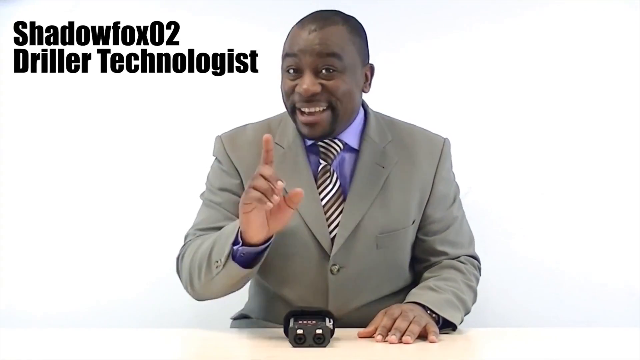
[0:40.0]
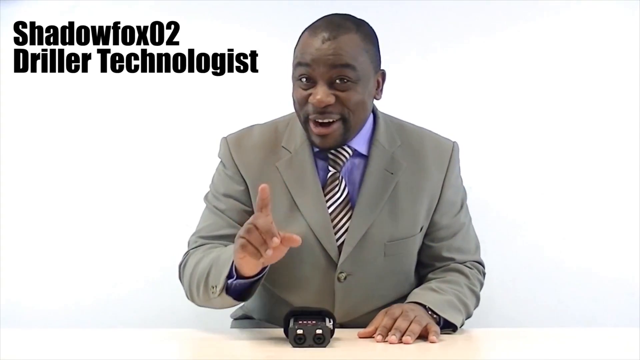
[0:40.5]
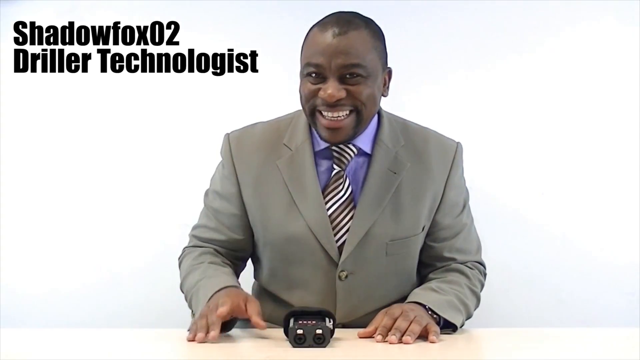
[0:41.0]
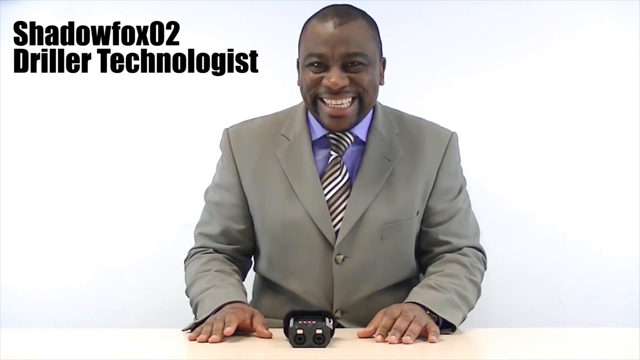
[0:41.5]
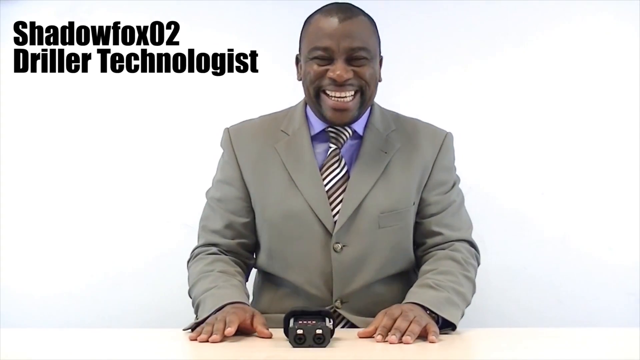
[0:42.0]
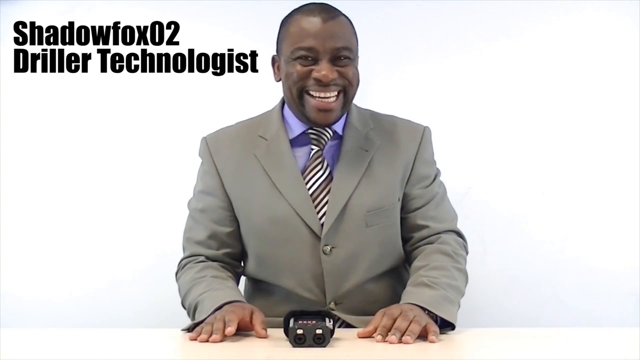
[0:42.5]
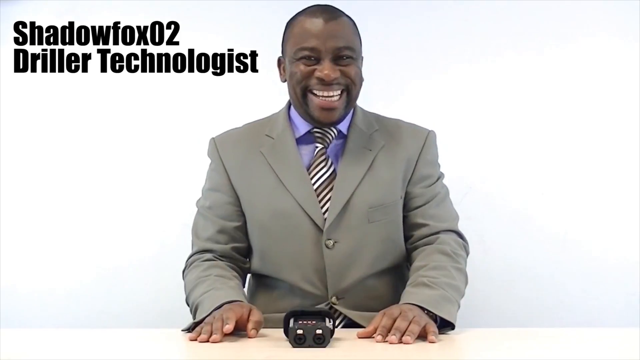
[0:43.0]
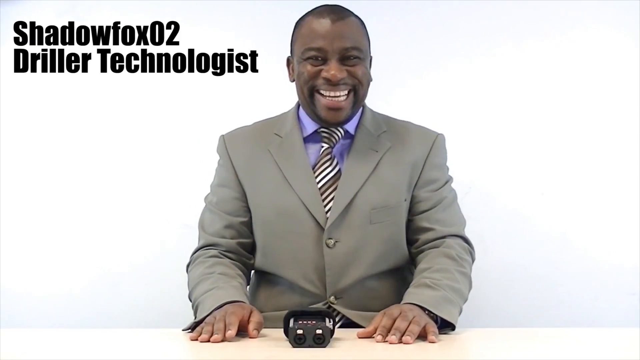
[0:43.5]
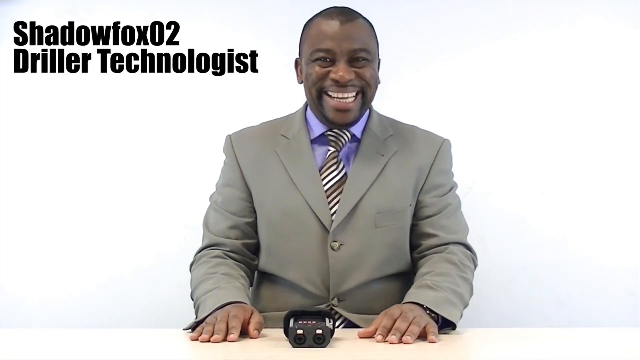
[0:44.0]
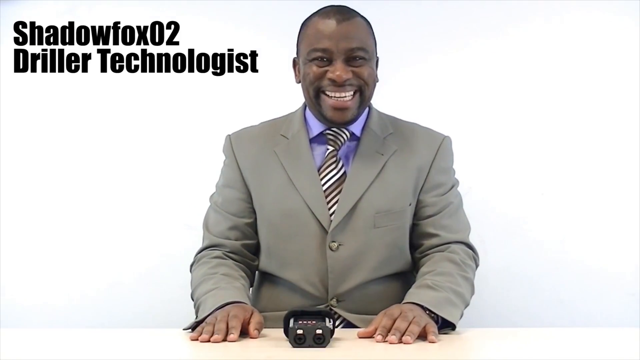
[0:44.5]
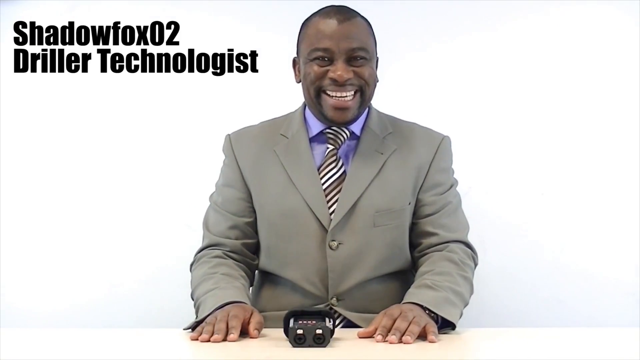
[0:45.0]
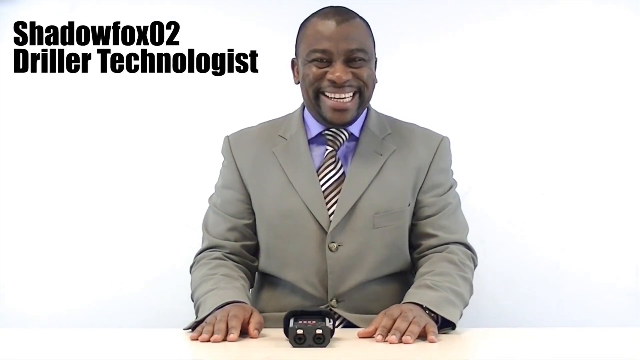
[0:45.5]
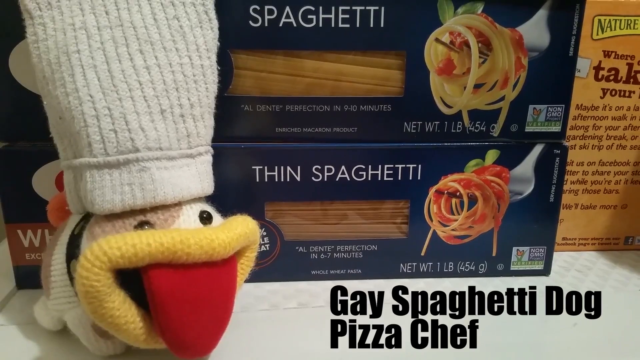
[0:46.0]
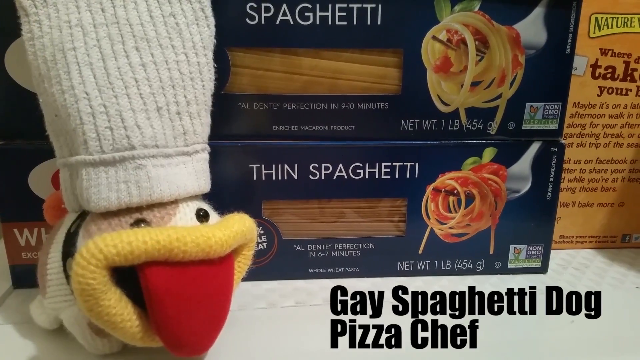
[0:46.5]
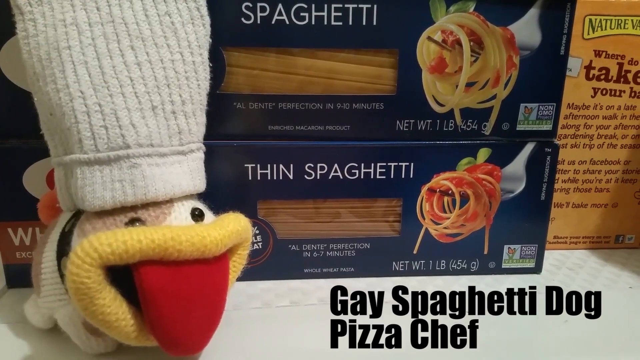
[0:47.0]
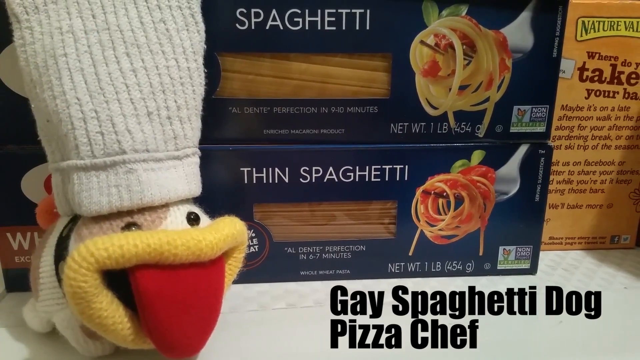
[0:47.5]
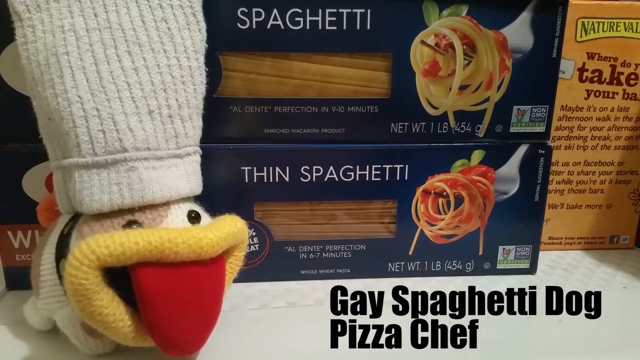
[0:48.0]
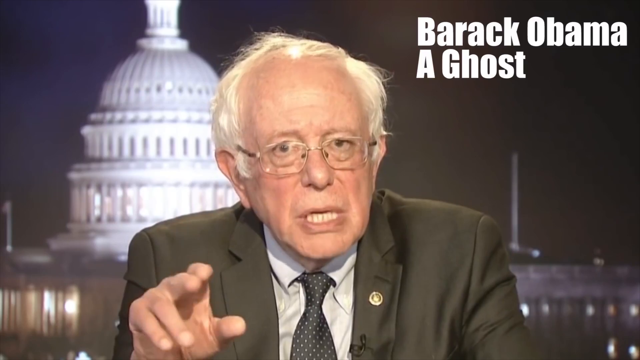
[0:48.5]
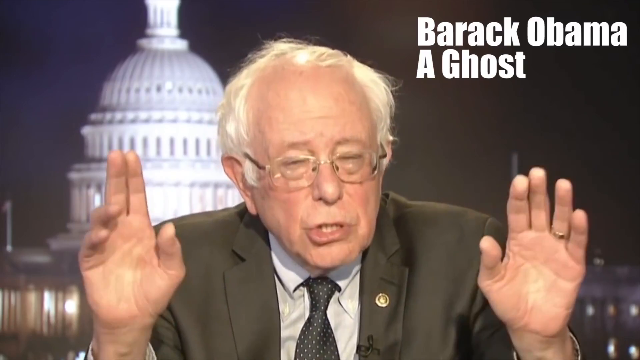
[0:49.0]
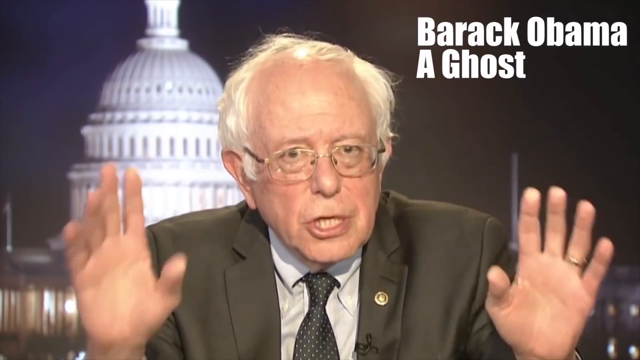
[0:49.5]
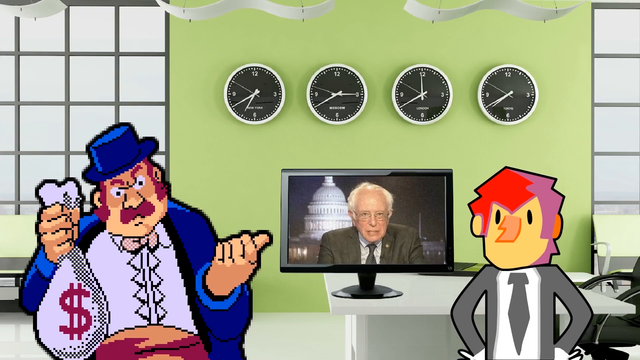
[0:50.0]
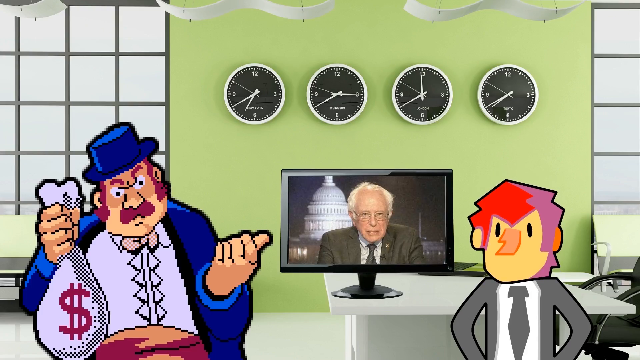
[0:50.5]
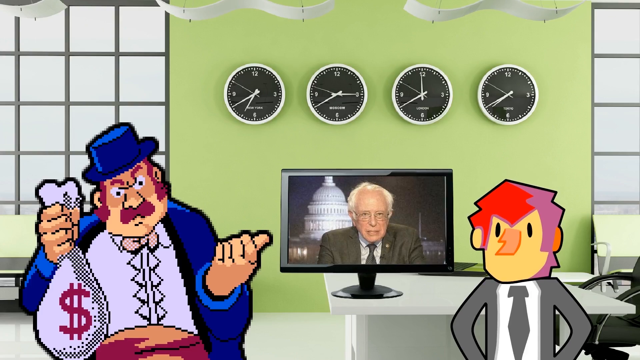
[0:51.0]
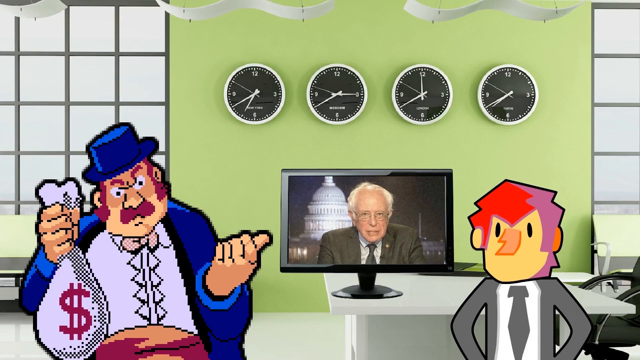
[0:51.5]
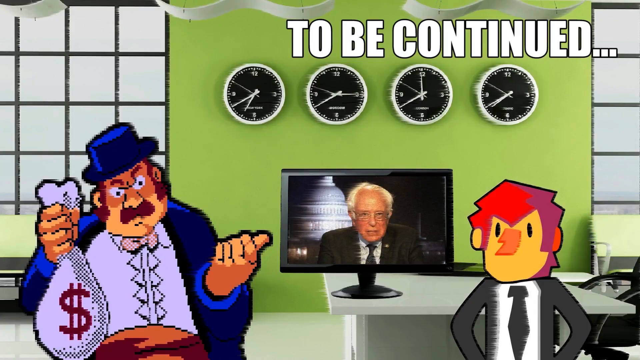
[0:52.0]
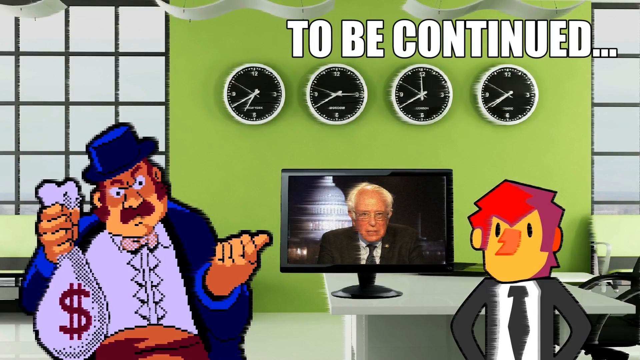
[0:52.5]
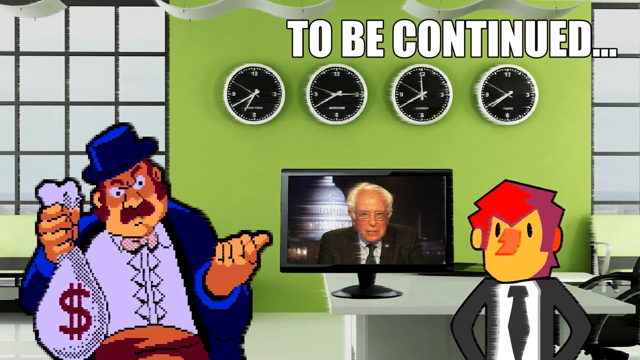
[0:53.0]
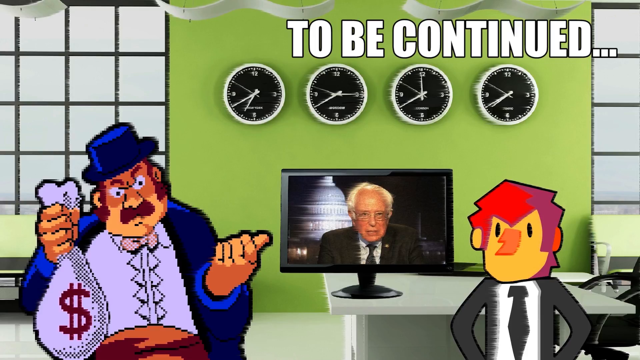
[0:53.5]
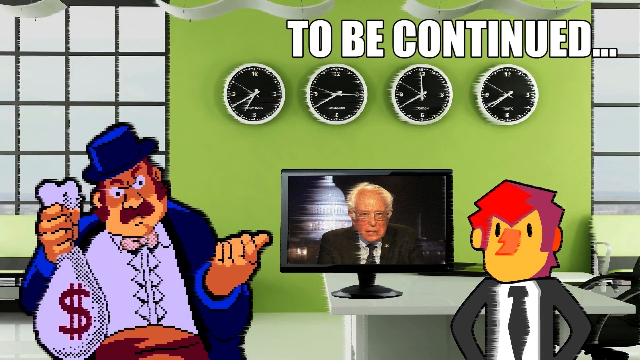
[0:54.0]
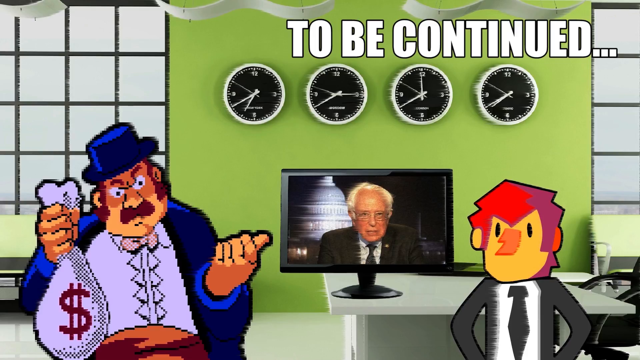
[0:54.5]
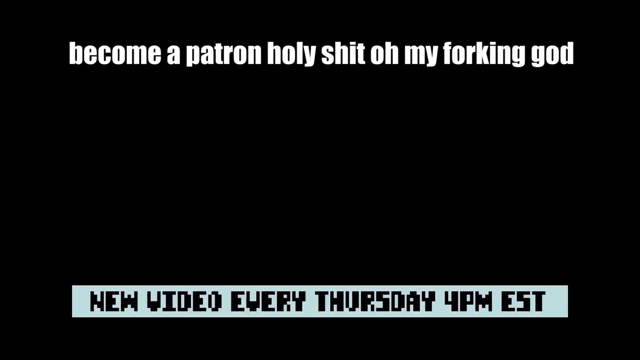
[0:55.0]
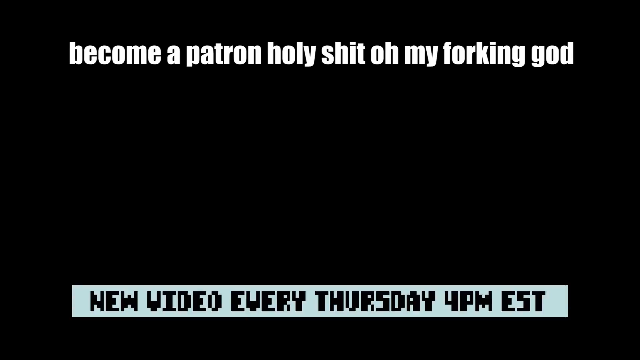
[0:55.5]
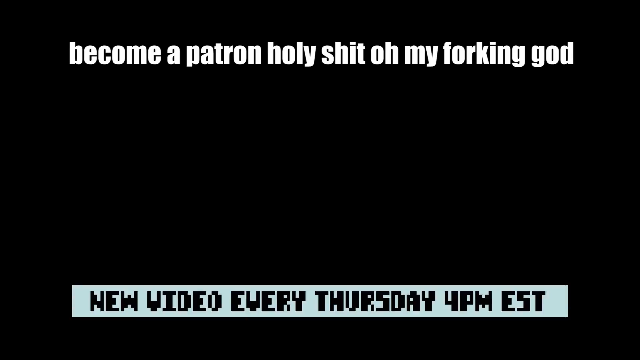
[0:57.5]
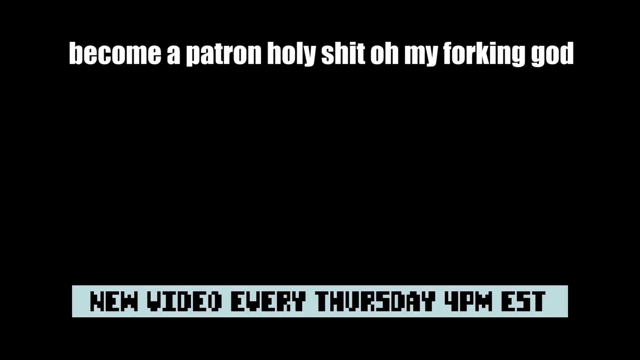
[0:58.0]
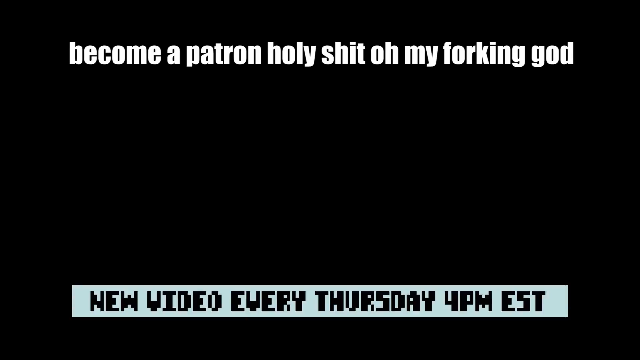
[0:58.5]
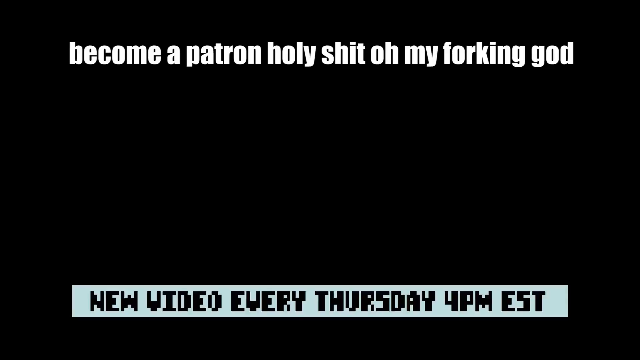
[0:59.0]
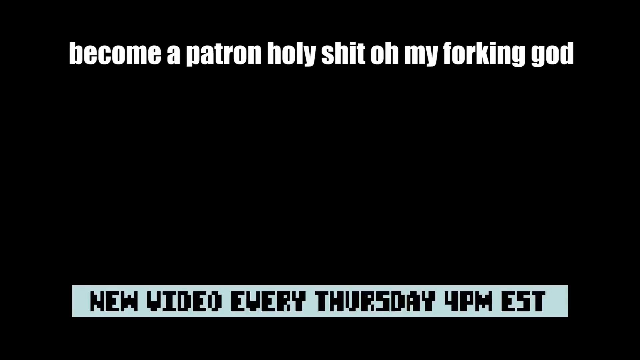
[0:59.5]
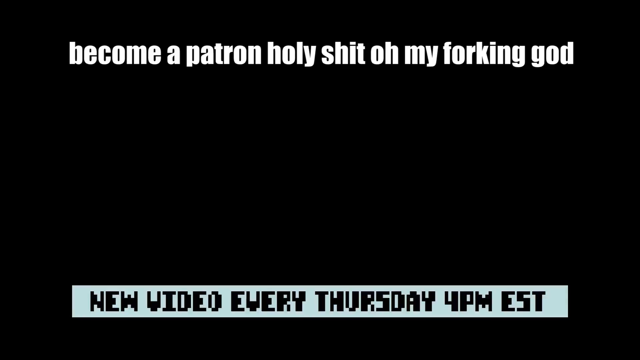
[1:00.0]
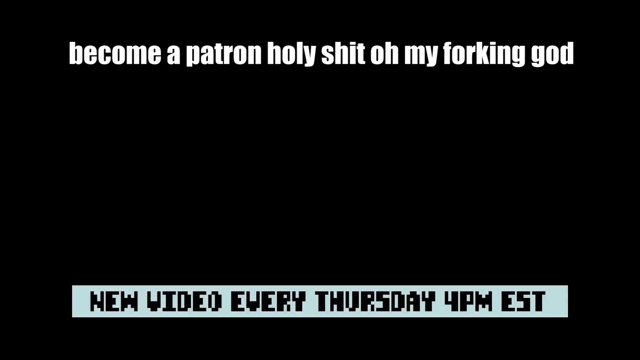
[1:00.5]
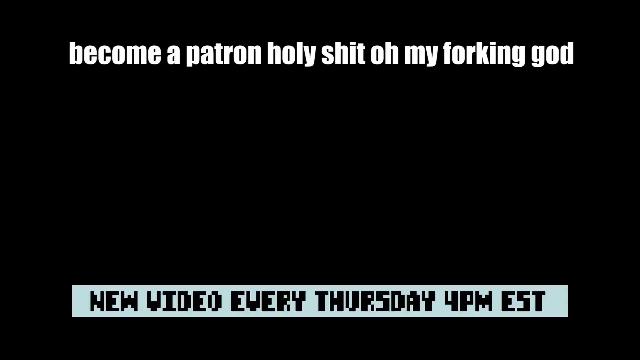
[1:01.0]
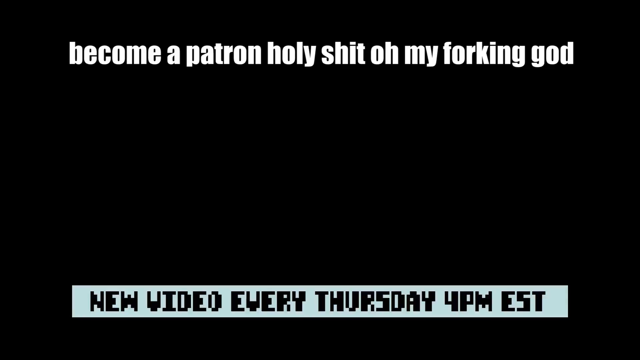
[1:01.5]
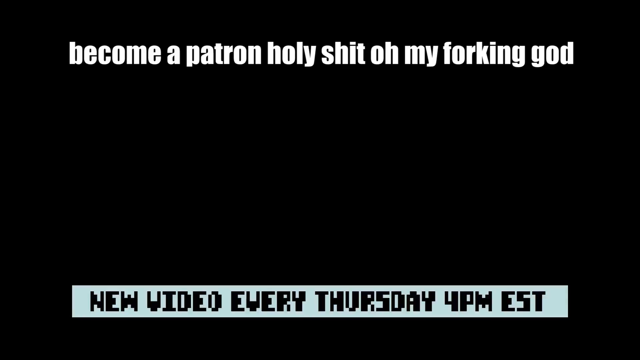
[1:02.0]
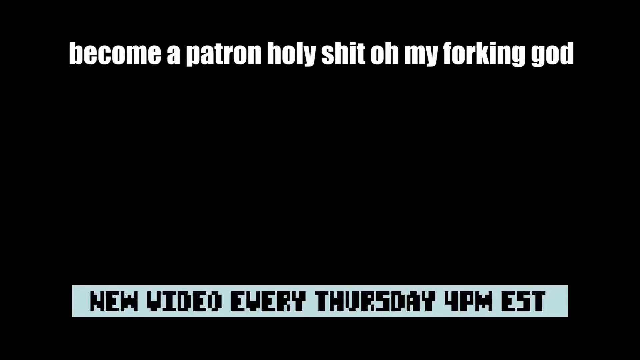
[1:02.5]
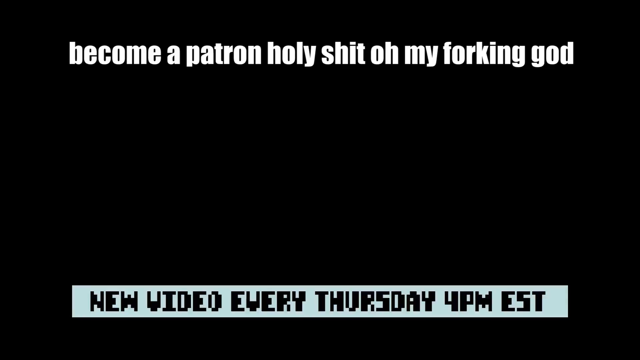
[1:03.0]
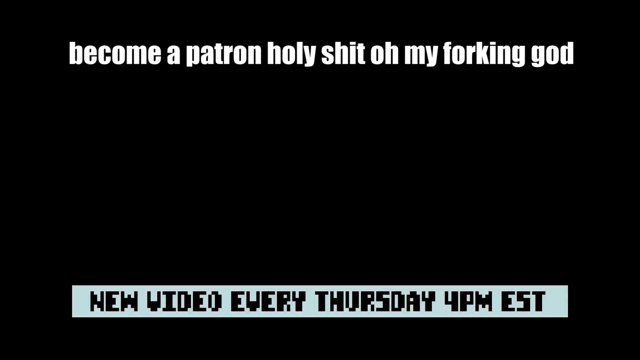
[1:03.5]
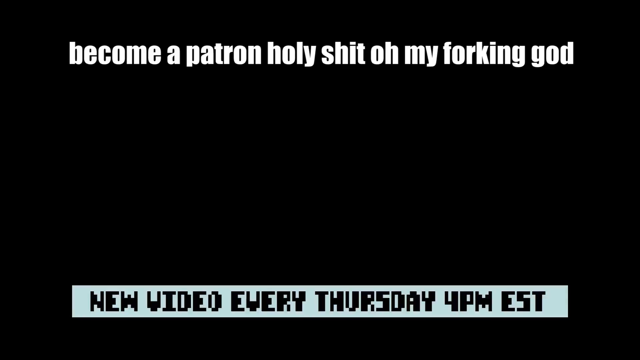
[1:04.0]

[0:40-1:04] The same black man in the suit and tie is still holding up one finger, with "shadowfox zero two driller technologist" in black bold letters to the left of his head. He continues talking until he starts grinning and almost giggling, and puts both hands on the table in front of him on either side of the device. The shot changes to what looks like a sock creature with a big red tongue, yellow lips, a tri-colored brown and white body, black beady eyes and maybe a collar. It wears a tube sock as a hat with a little purple tassel. Behind it are two boxes of uncooked spaghetti and what seems to be a box of Nature Valley granola bars. Text in the bottom right-hand corner reads "gay spaghetti".